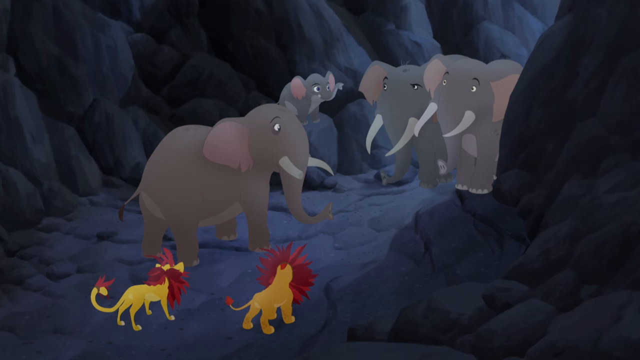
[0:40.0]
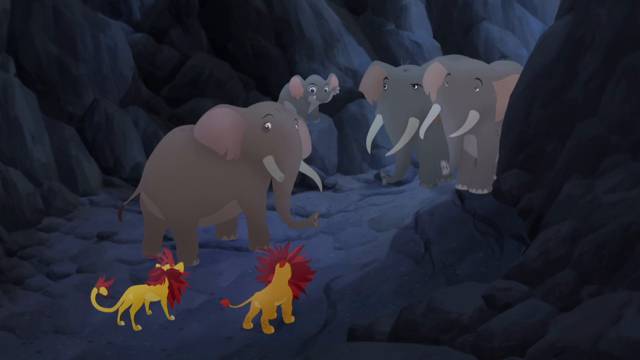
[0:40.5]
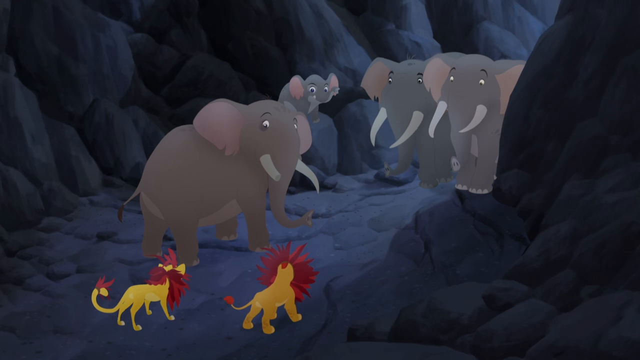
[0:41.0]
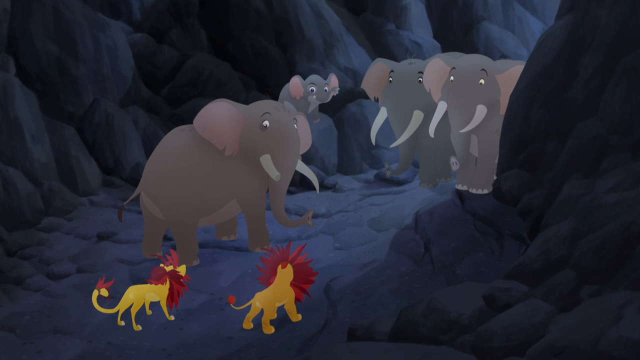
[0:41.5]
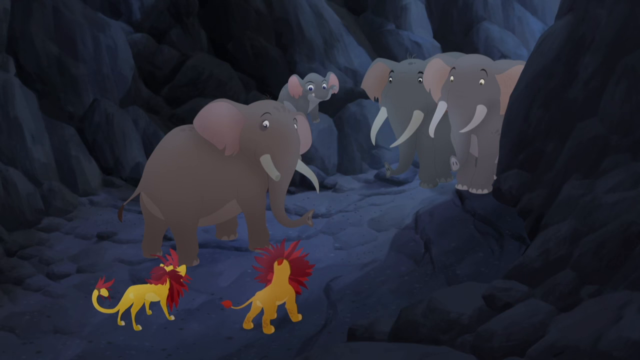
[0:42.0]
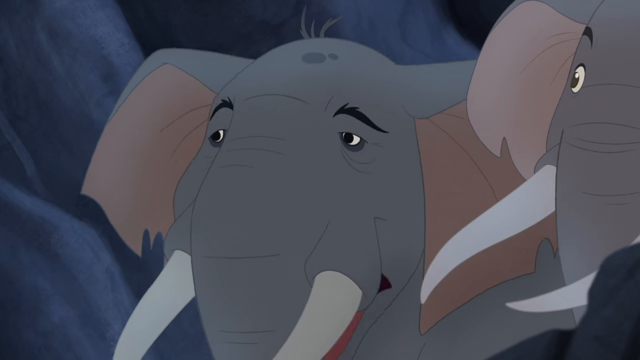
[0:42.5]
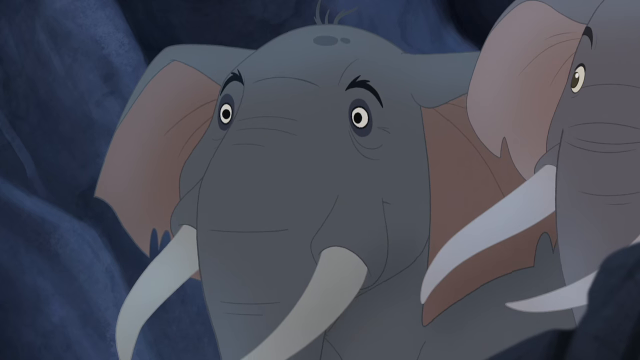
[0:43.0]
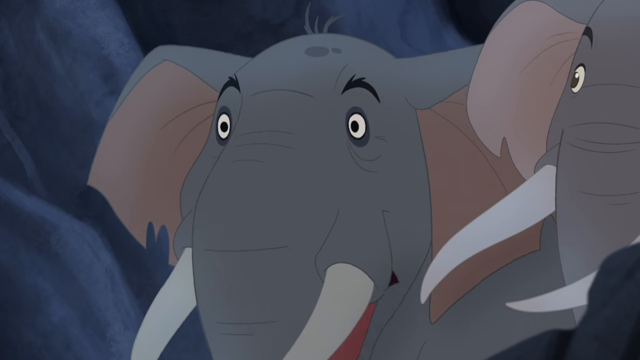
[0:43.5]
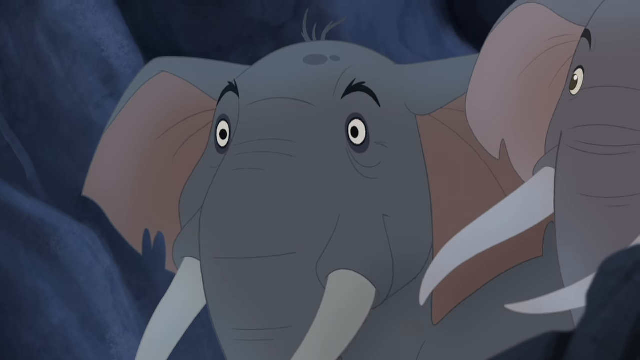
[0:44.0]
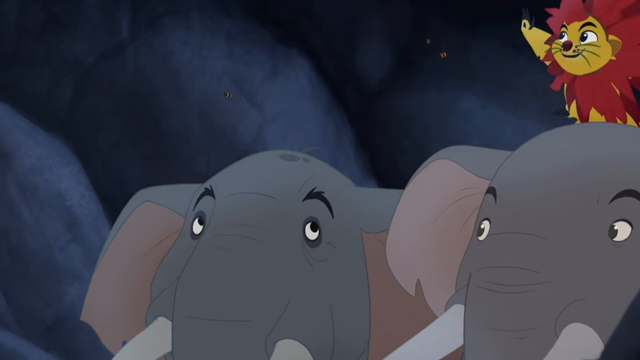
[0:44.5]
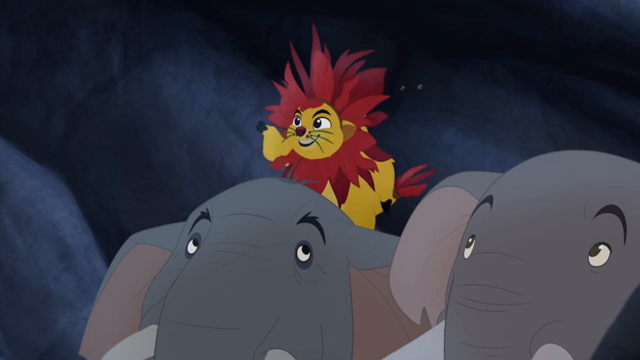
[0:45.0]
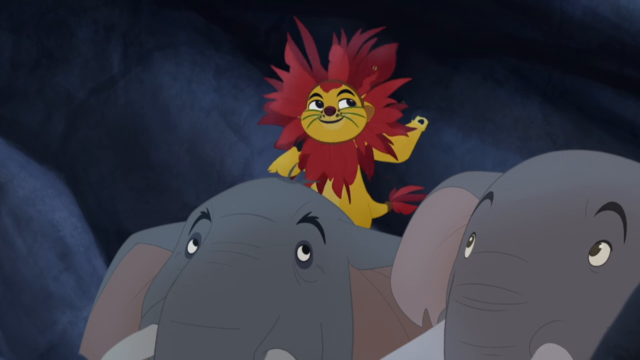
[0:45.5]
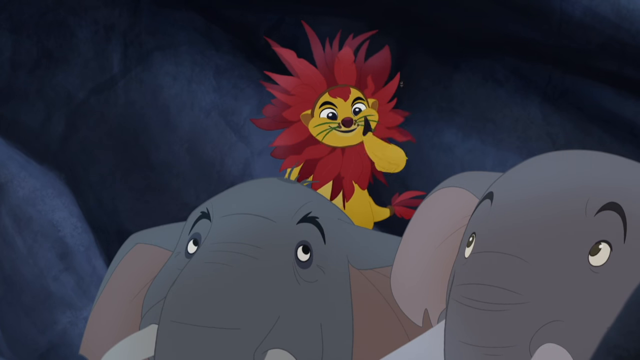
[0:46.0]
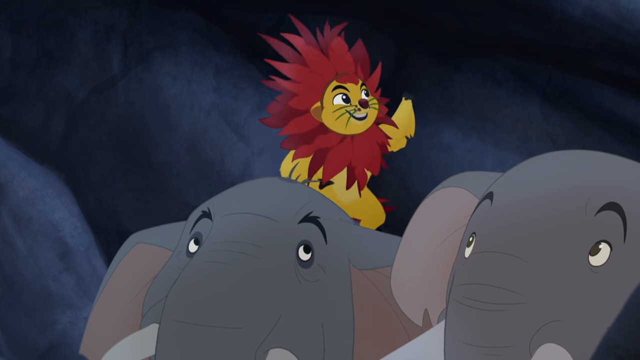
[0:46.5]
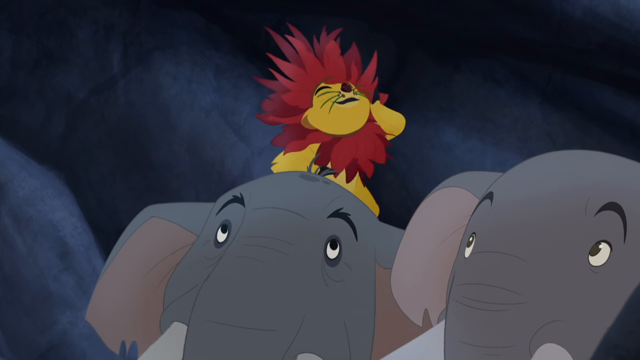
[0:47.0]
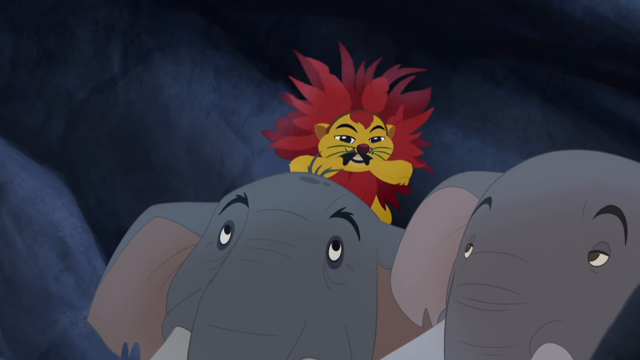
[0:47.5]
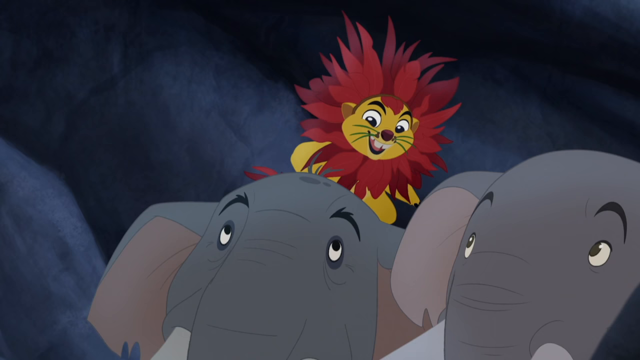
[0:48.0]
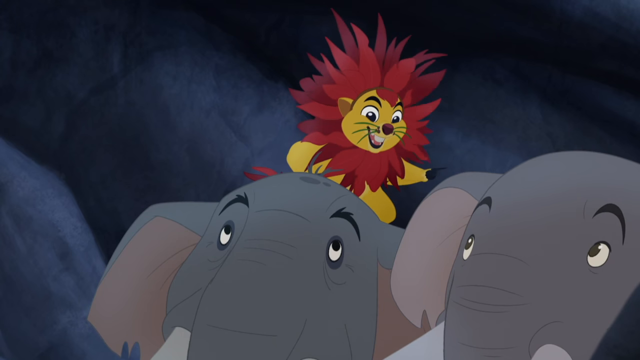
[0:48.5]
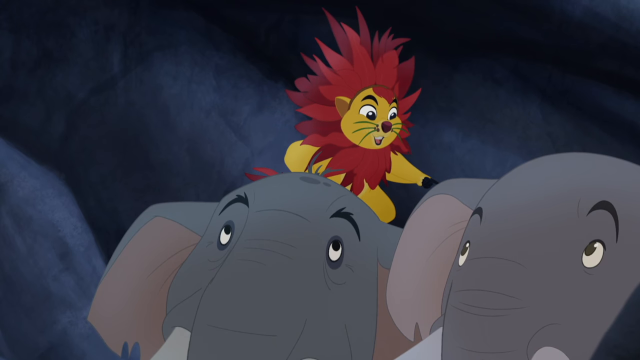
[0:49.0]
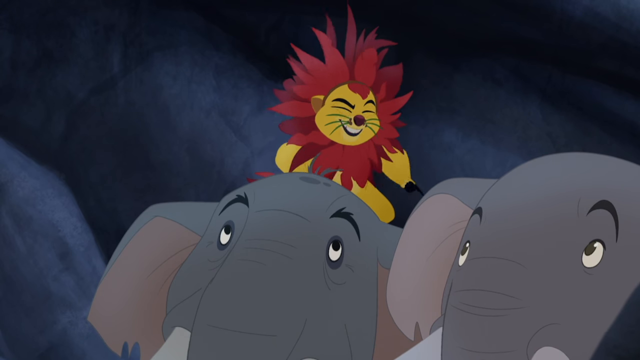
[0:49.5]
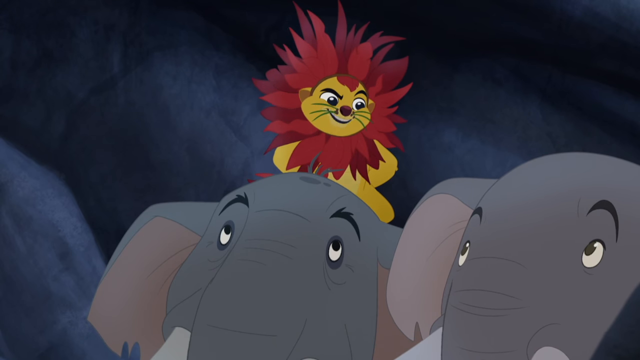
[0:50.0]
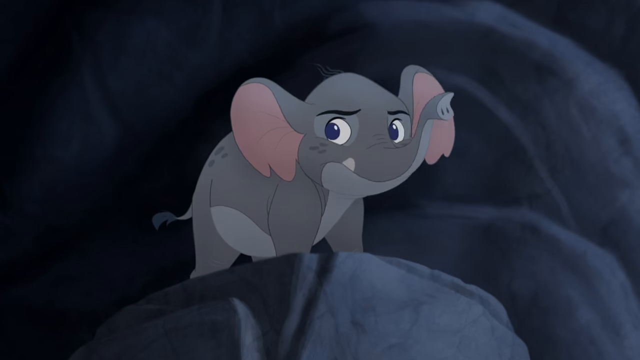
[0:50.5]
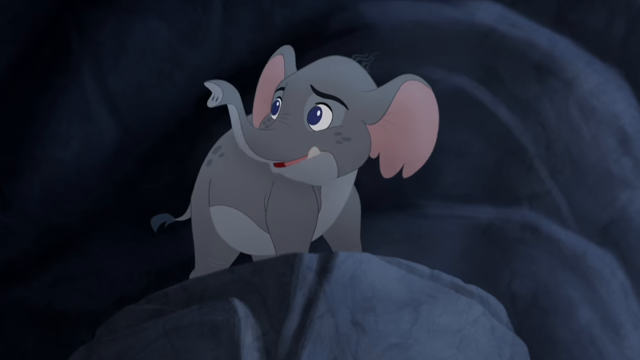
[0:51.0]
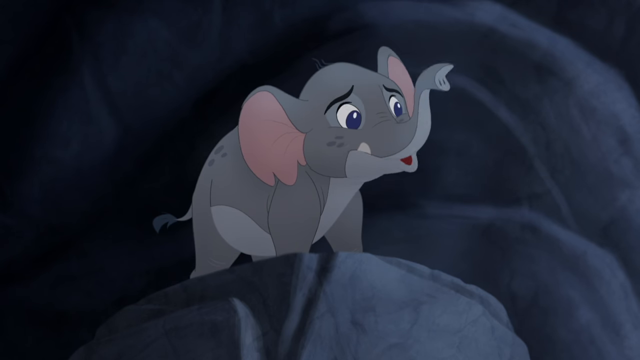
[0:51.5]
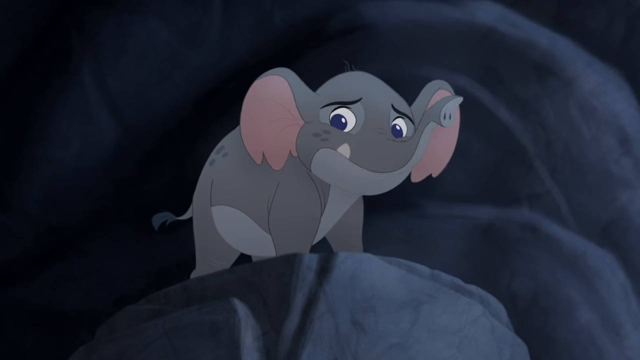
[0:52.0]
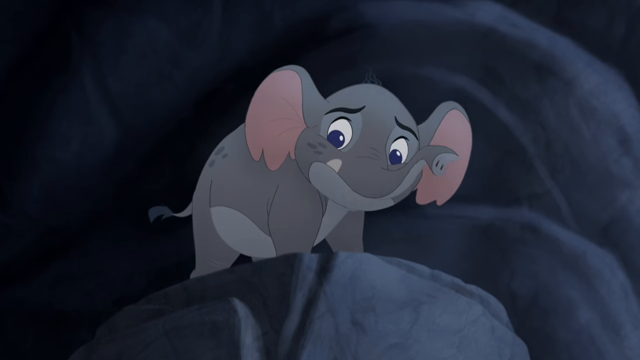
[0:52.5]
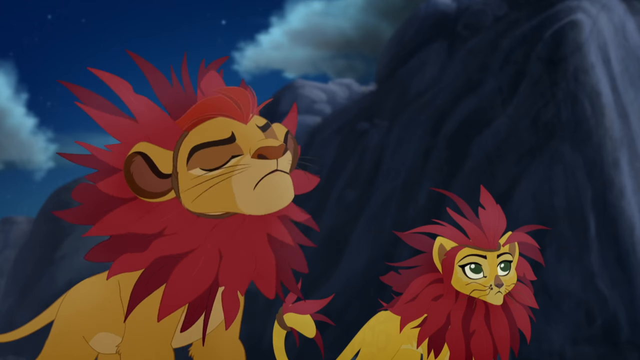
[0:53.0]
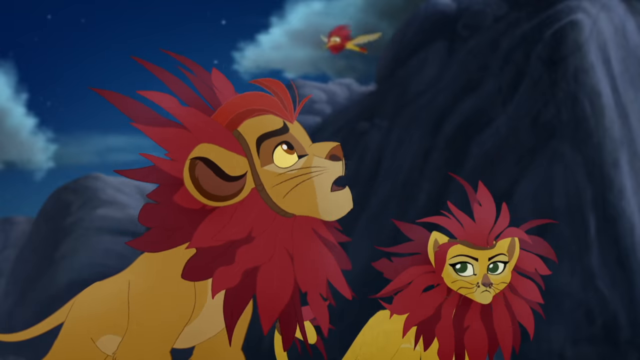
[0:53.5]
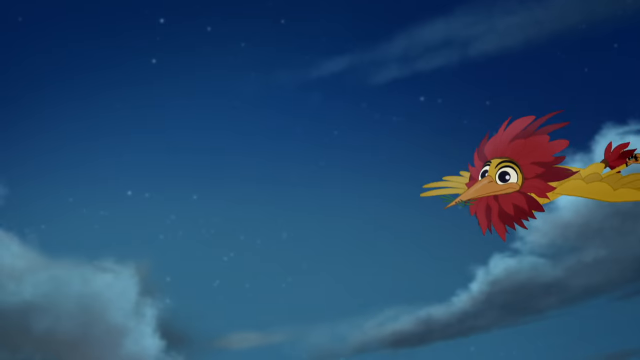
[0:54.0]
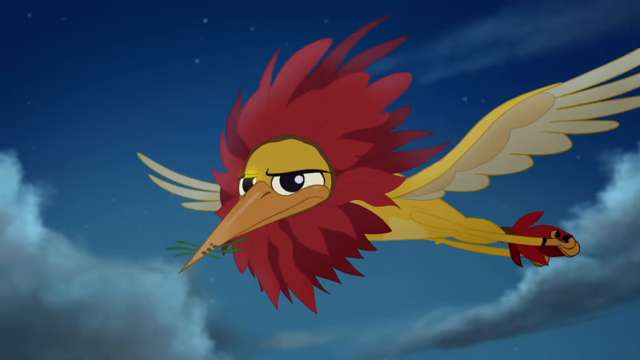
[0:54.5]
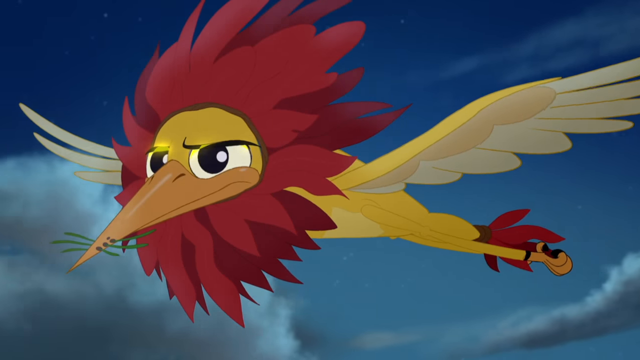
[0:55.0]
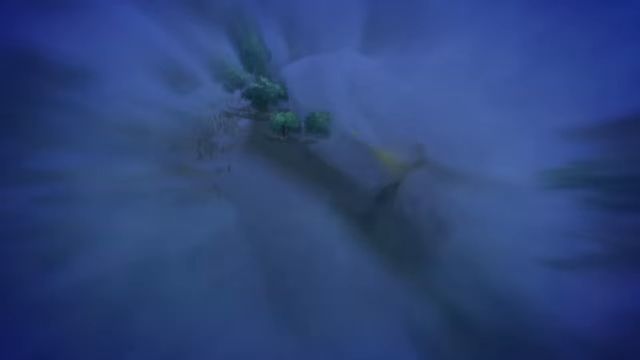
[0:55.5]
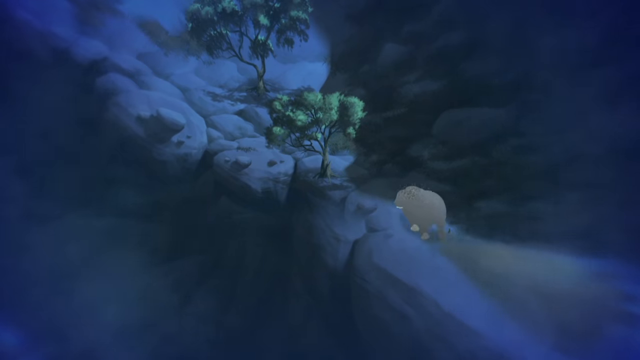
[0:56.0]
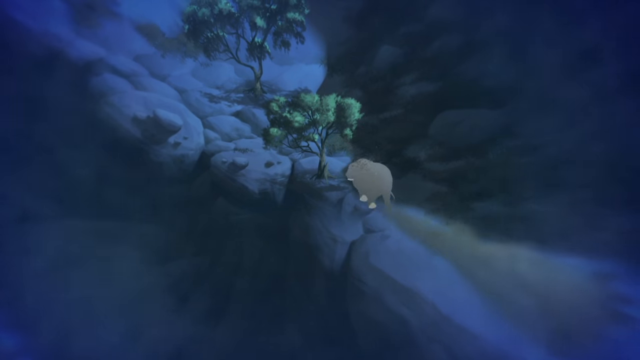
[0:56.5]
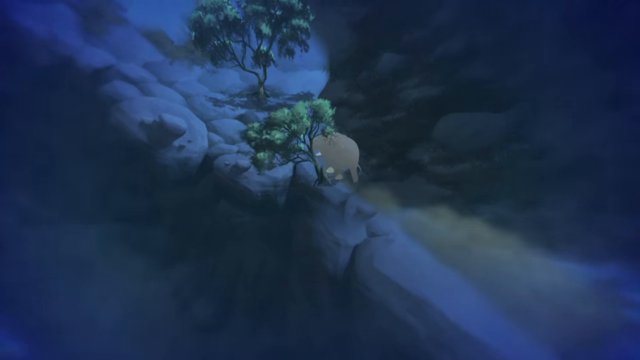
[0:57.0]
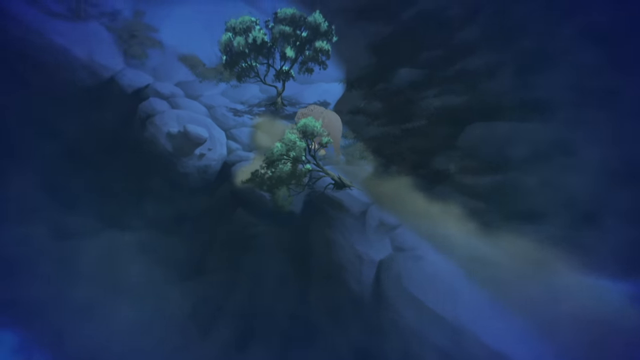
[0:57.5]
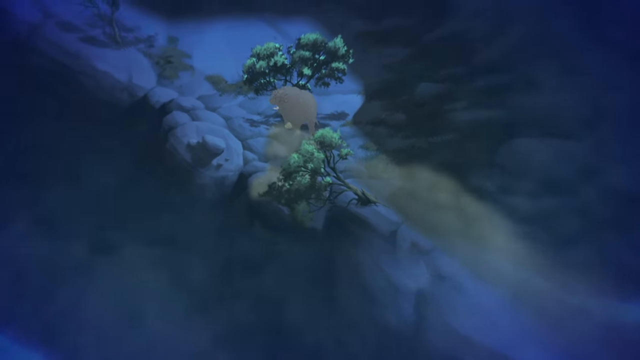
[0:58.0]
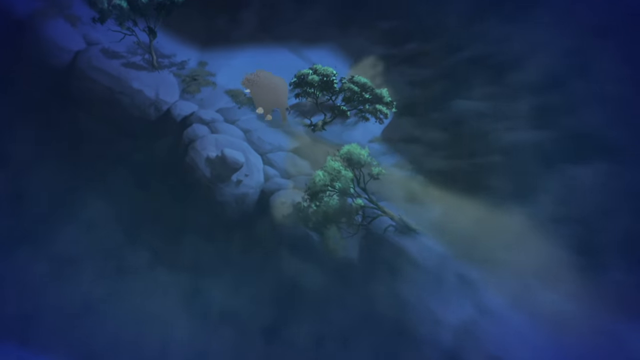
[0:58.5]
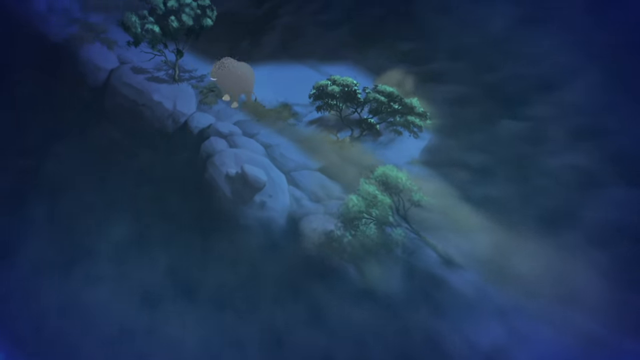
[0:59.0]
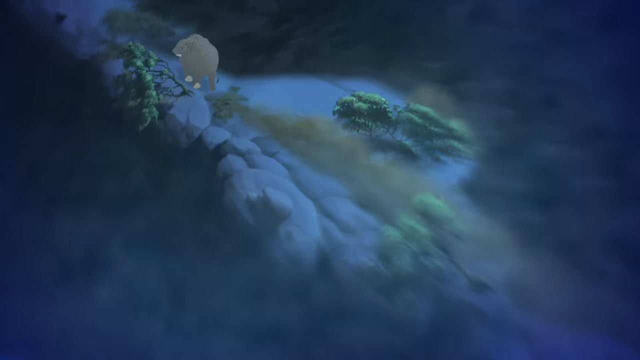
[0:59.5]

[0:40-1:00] A rocky cavern or valley holds three big elephants and one small elephant sitting or standing on a rock. Two lion-looking characters are at the bottom left of the screen. All the characters look cartoonish; the lions are yellow with red manes, and the elephants are all different shades of gray. The baby elephant's ears are pink on the inside. One of the big elephants talks. A little baby lion walks on top of the talking big elephant, laughing. An insect flies over the elephant's head, and the lion grabs it out of the air and eats it. The baby elephant, which has blue eyes, talks. A male and a female lion are then in the center of the screen; the male has brown eyes and the female has green eyes. The male looks up at the sky at a bird, which is yellow with red feathers around its head and on the end of its tail.